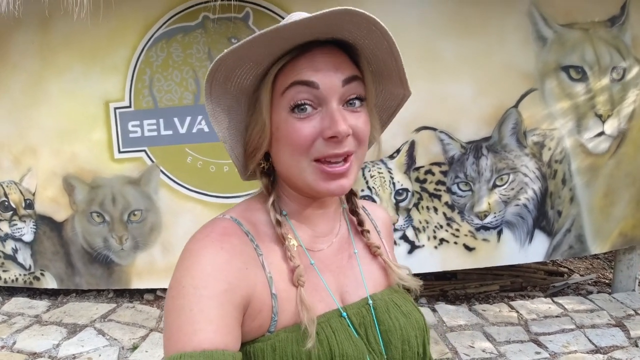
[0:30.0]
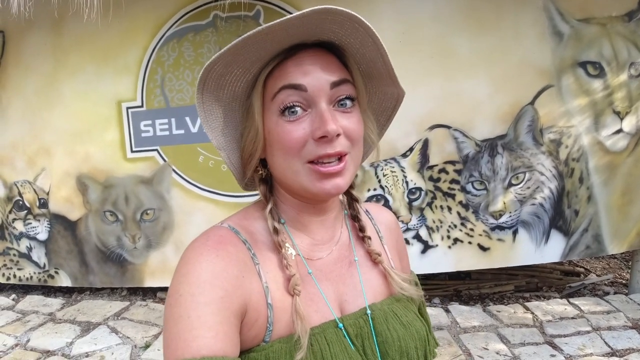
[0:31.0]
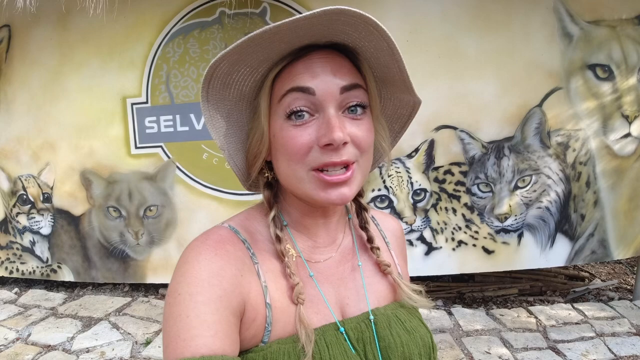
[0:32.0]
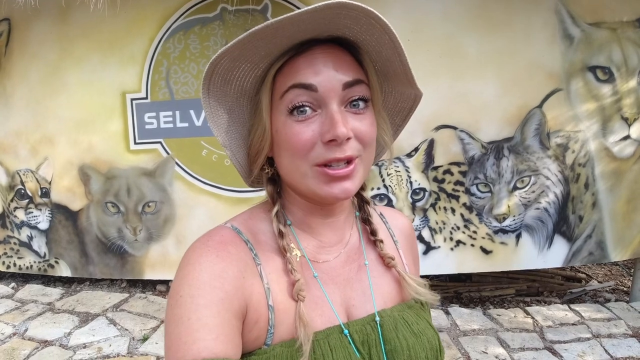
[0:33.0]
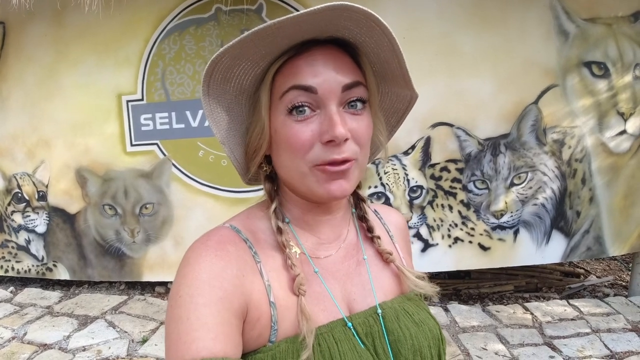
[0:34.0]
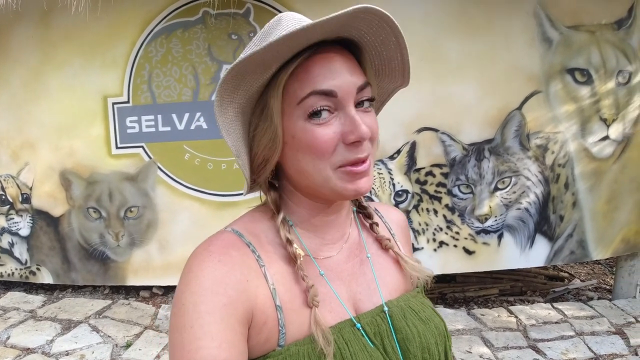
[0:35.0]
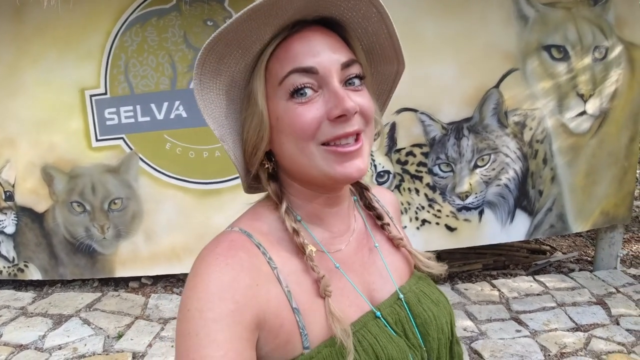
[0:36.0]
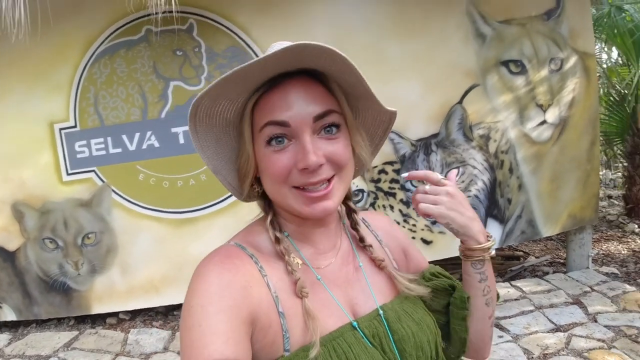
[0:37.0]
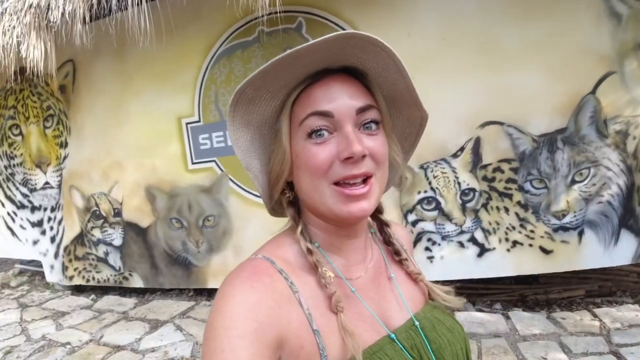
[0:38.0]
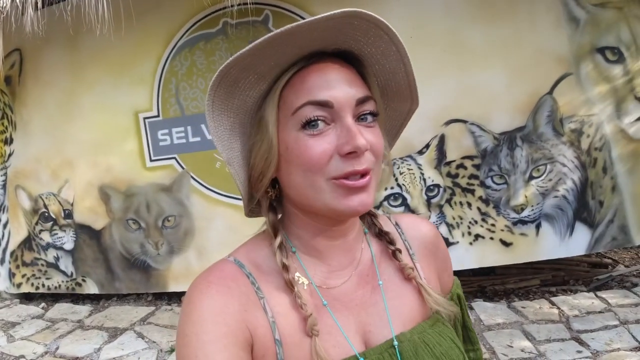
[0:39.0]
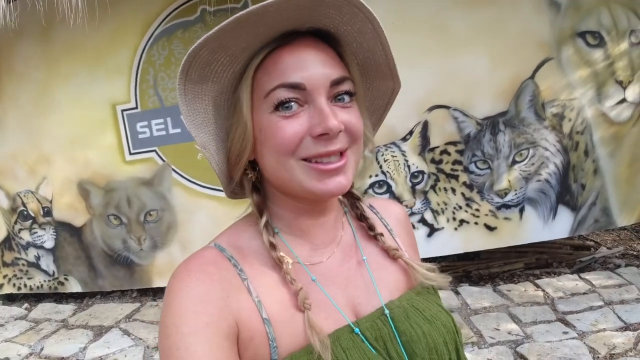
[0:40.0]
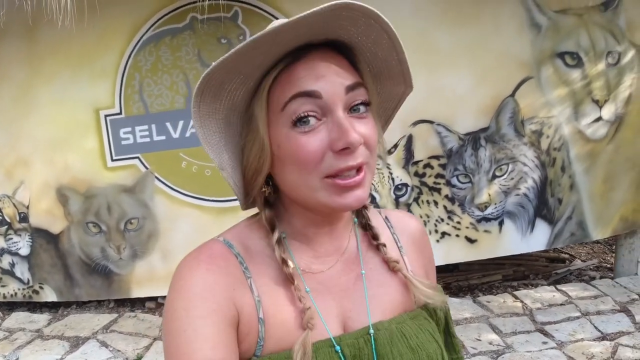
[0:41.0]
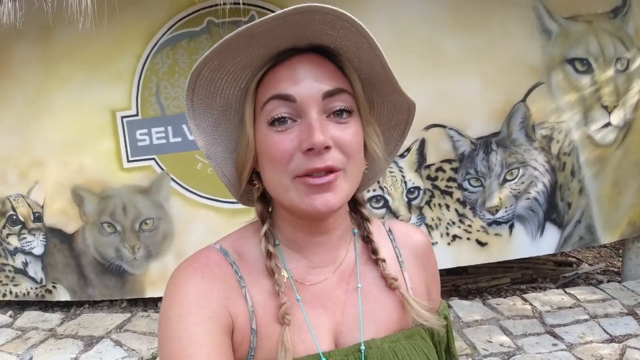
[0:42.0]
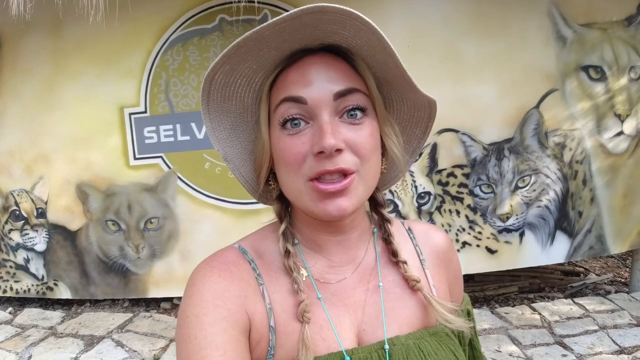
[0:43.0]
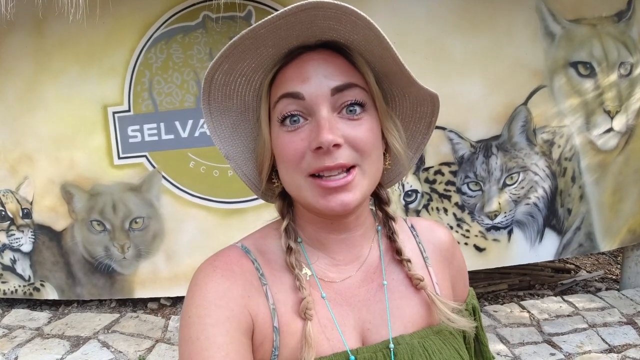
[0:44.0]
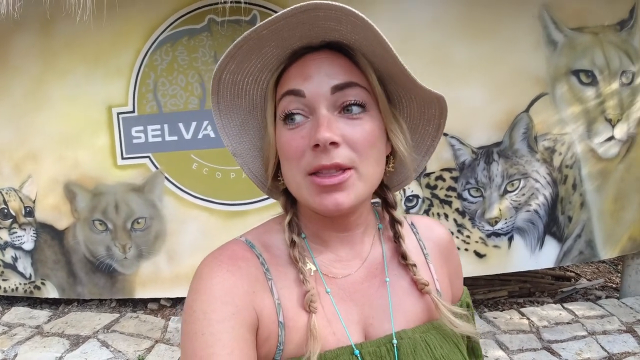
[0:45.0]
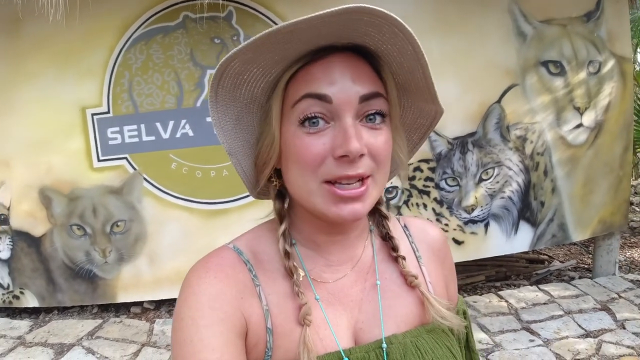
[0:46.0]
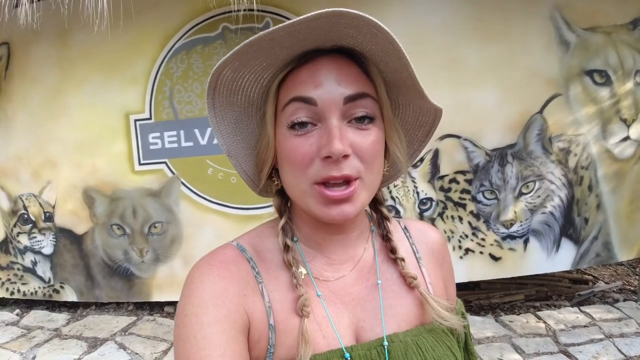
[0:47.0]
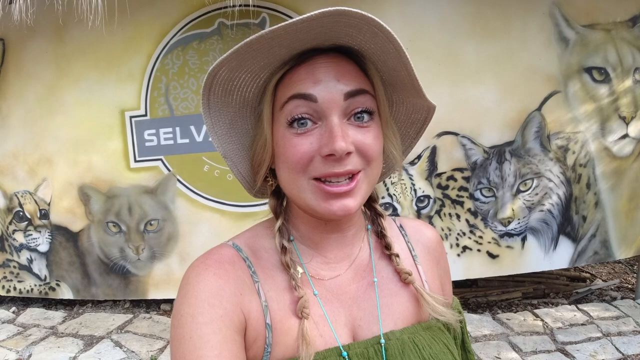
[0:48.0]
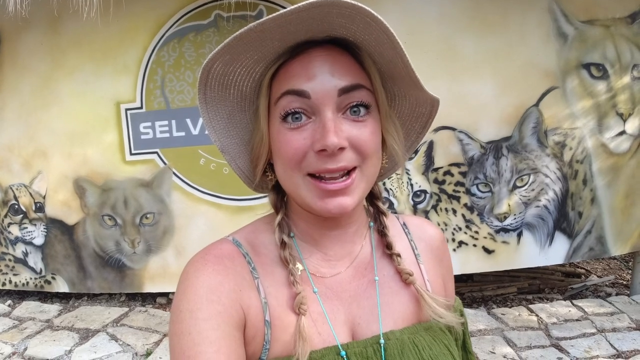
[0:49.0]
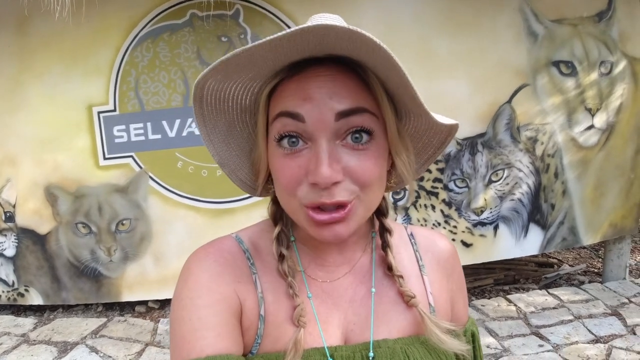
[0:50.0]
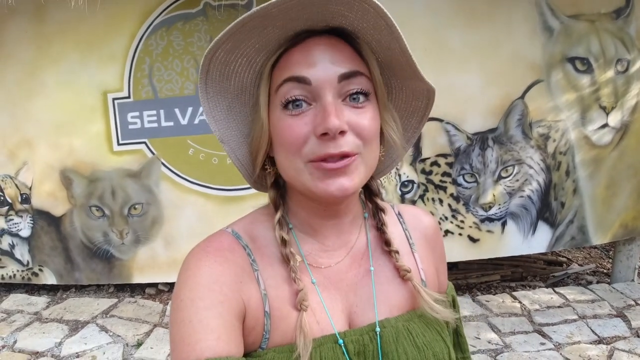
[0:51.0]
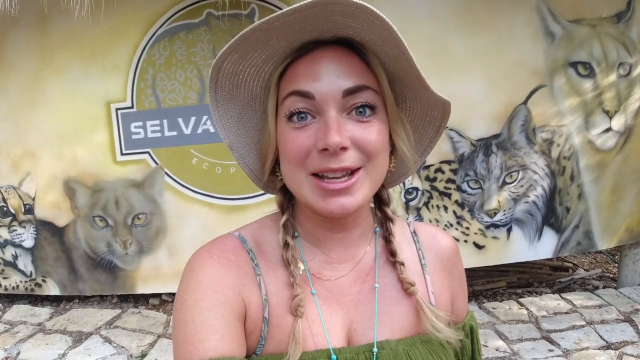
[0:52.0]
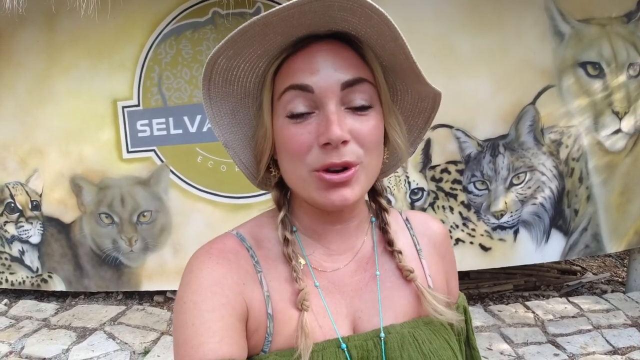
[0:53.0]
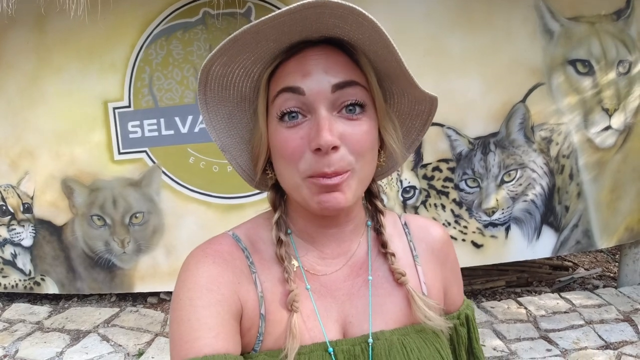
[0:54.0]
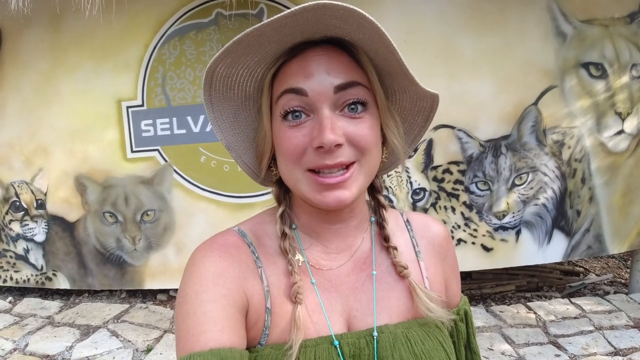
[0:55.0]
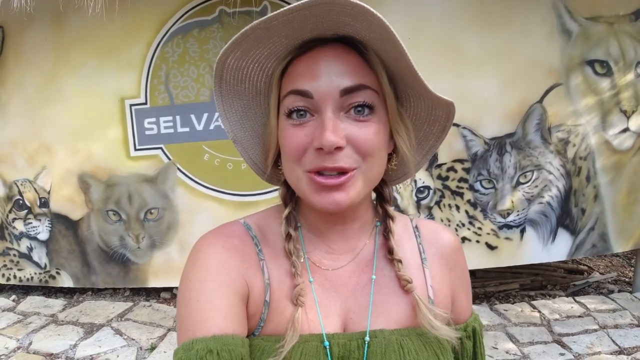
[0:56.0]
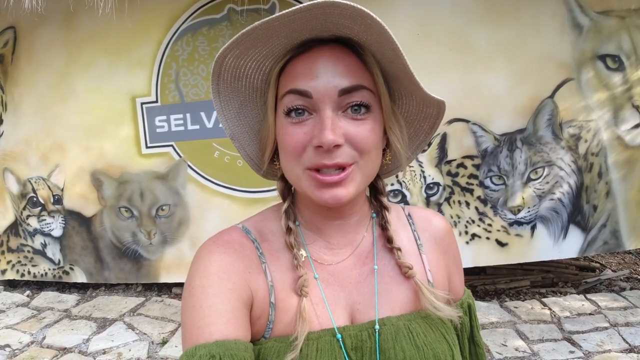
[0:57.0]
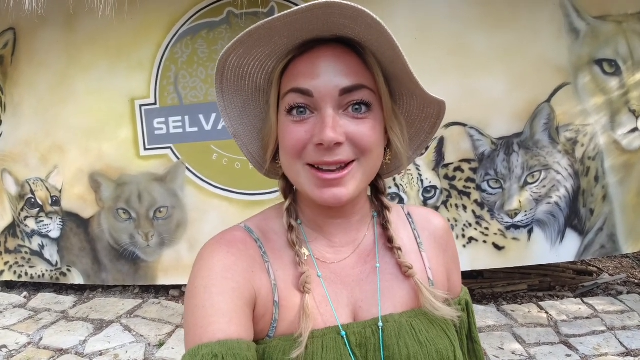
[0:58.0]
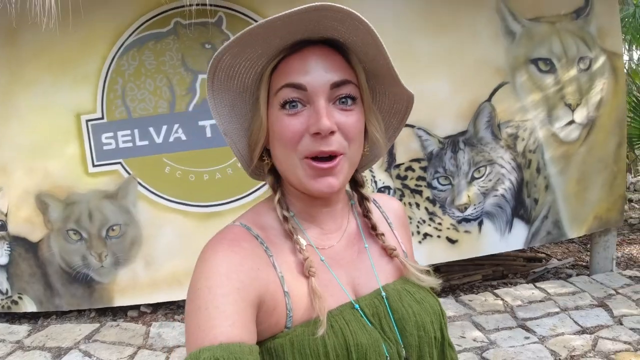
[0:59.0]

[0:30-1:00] A woman talks while standing in front of a wall with art of cats on it, like a billboard with cats drawn on it, and text on the board reads "silver tip". The camera moves as she talks, since she is the one holding it. She wears a sun hat and a sleeveless top. There is art of three cats on one side of where she stands and two others on the other side. Looking directly at the camera and talking, she gestures with her other hand, pointing to where something is happening.